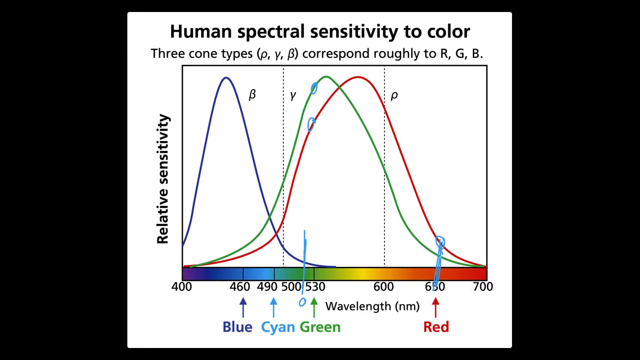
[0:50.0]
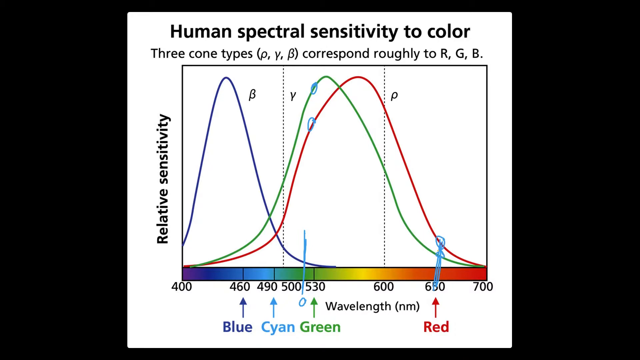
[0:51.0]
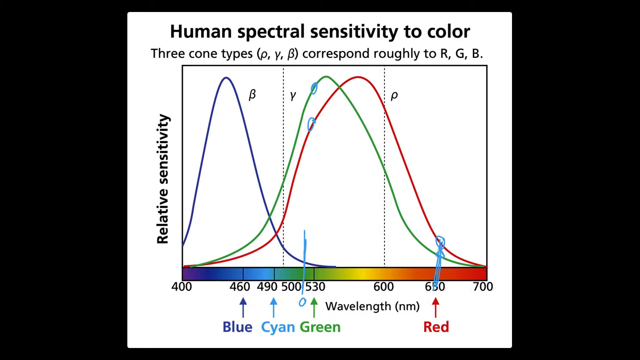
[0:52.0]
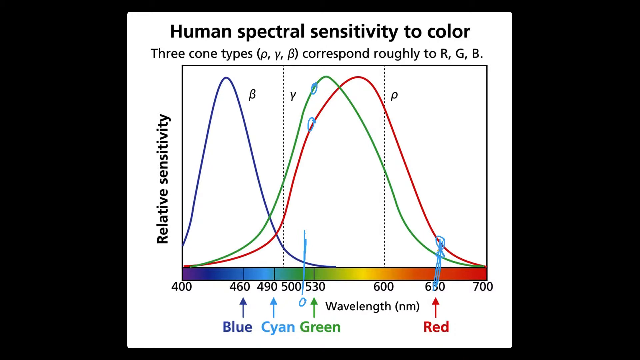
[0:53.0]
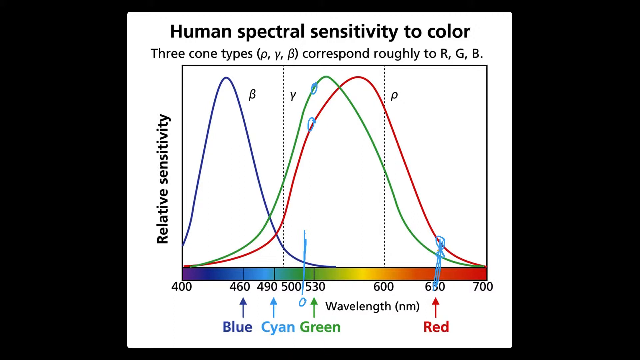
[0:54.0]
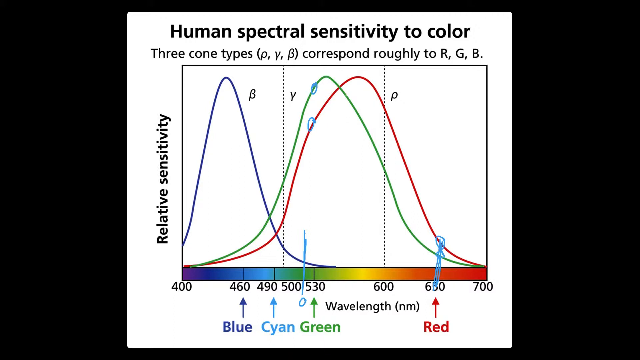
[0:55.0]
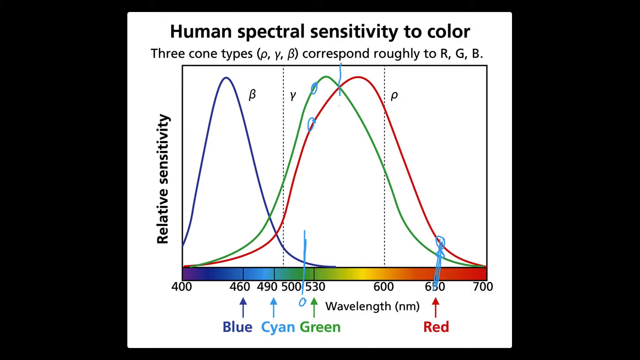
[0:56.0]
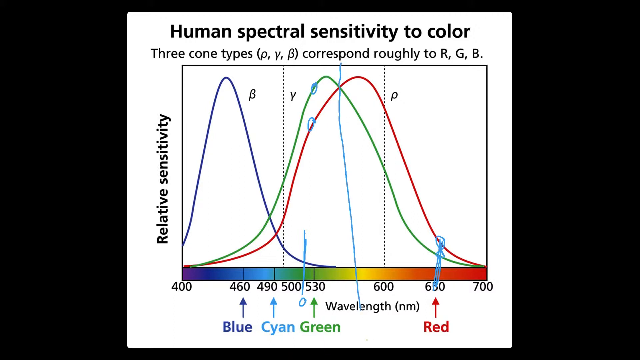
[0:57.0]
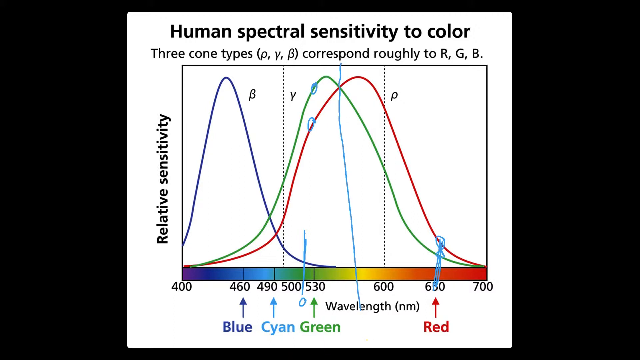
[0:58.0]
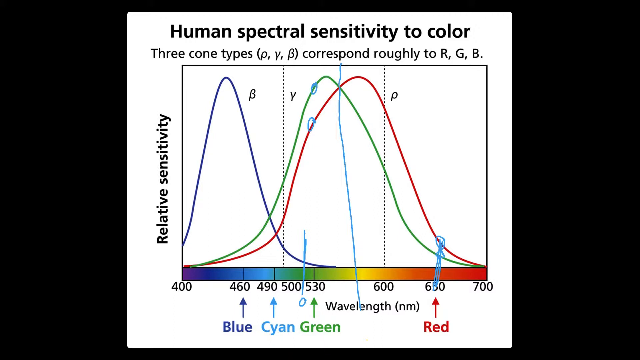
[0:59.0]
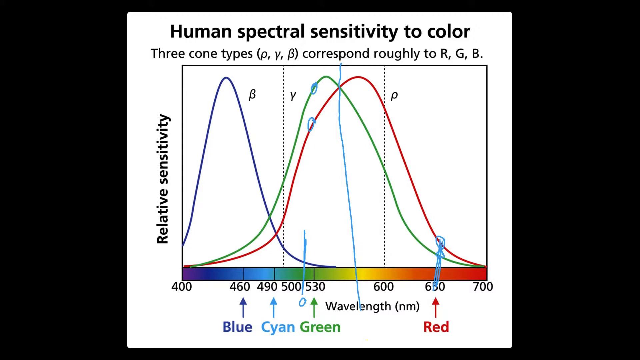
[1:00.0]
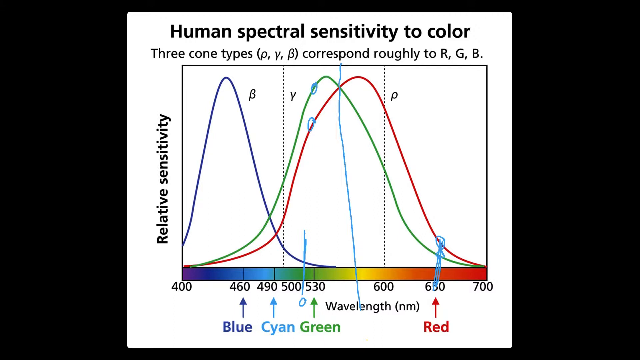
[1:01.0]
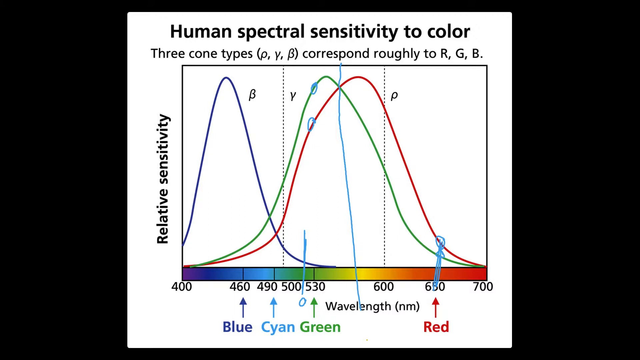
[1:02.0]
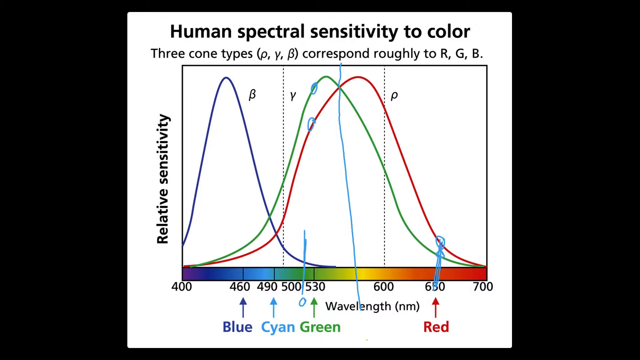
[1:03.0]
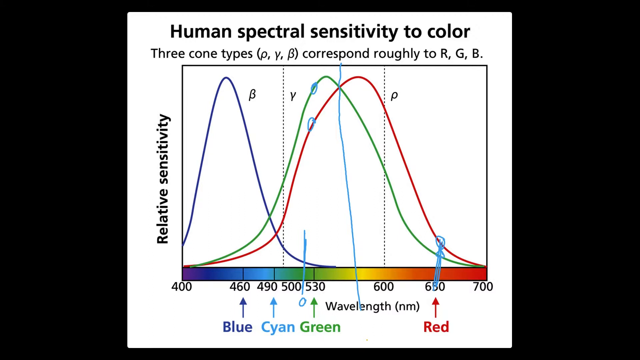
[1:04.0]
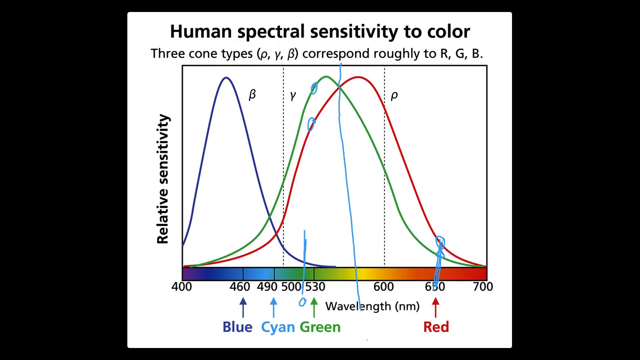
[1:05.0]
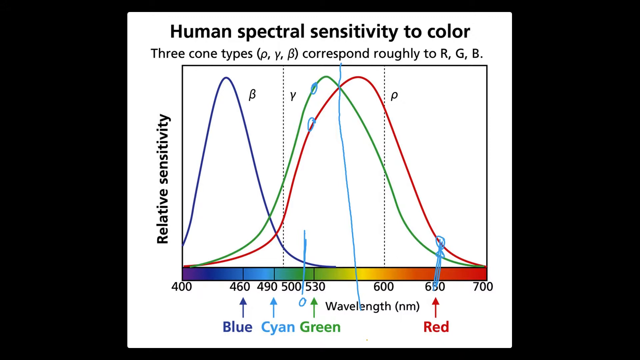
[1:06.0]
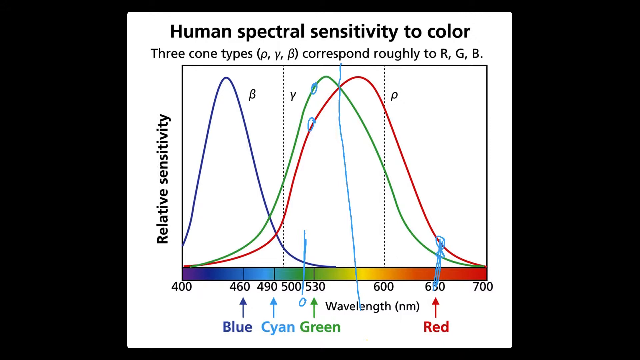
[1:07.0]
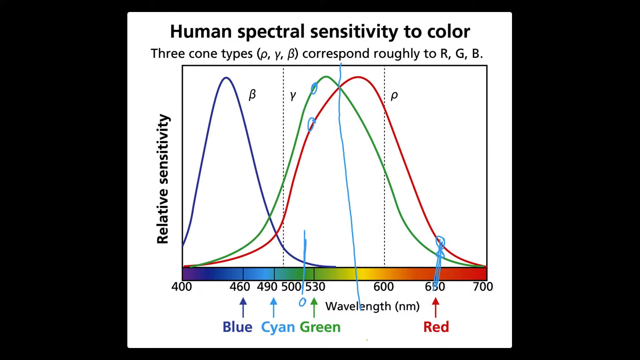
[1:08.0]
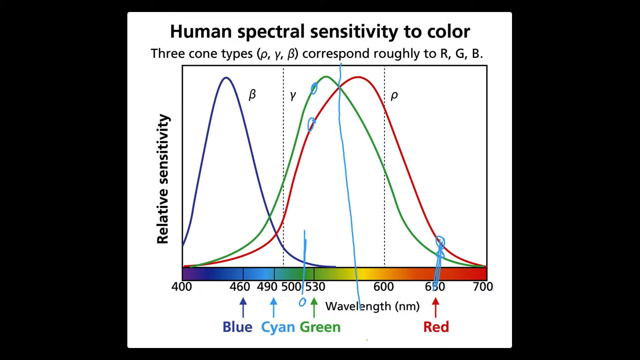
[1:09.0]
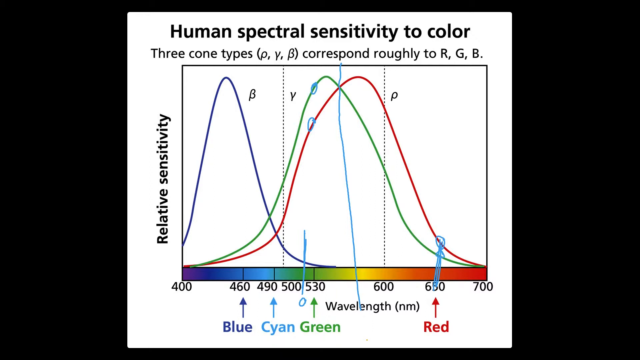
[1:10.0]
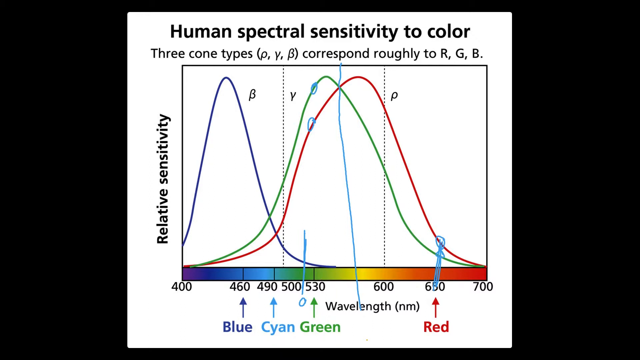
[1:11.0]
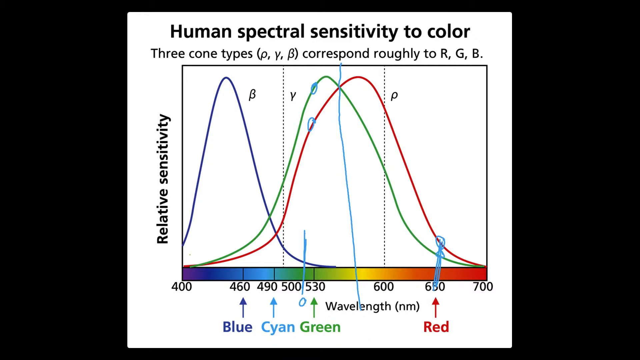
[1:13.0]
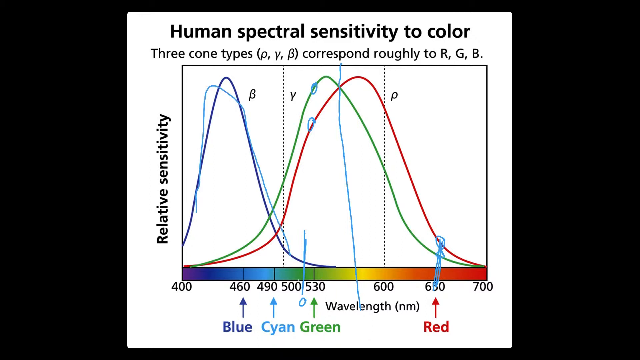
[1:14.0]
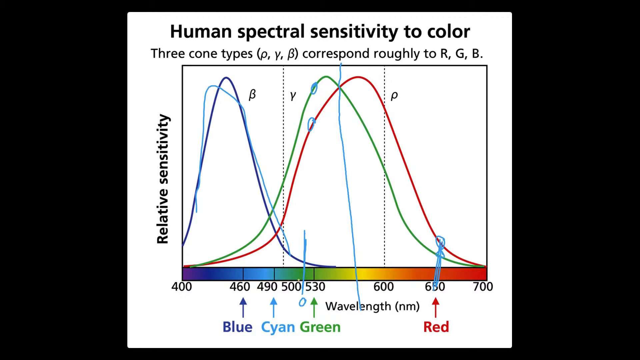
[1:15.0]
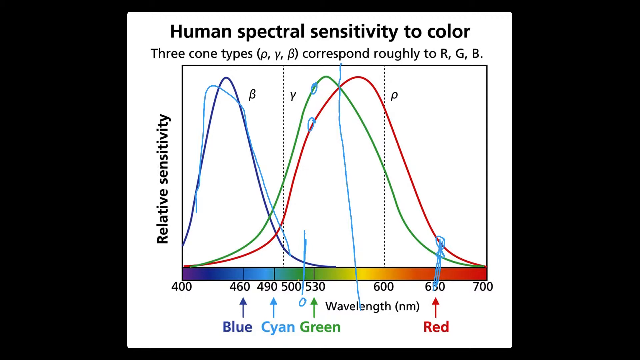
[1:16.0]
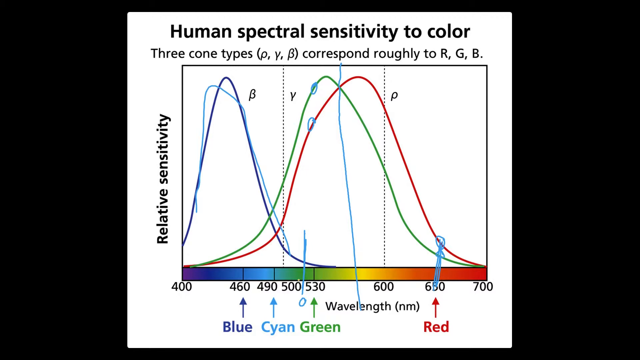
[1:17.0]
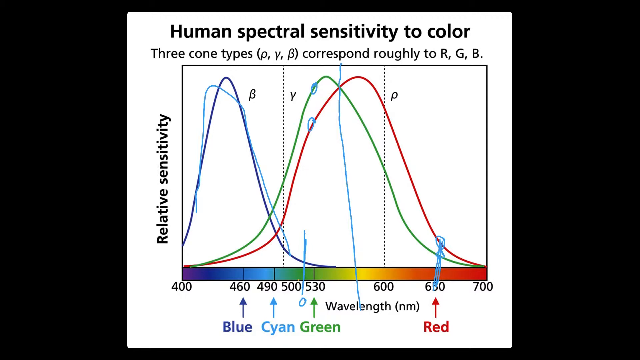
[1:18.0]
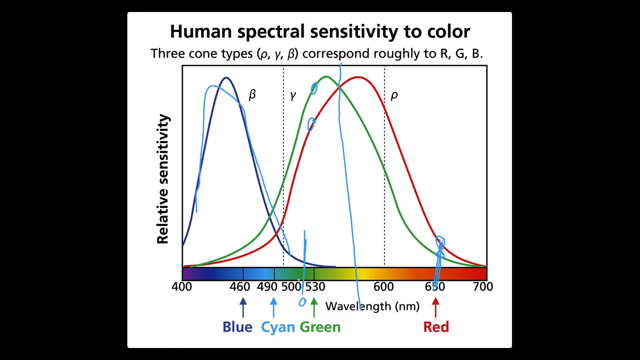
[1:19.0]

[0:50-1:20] The human spectral sensitivity to color diagram shows three different types of cones responding roughly to three different colors. Relative sensitivity is on the y-axis, and the x-axis shows a range of colors or wavelengths.